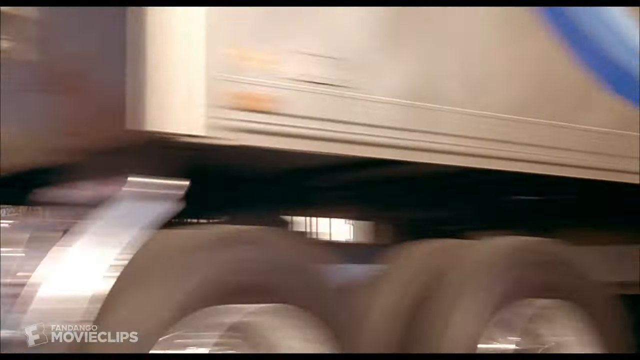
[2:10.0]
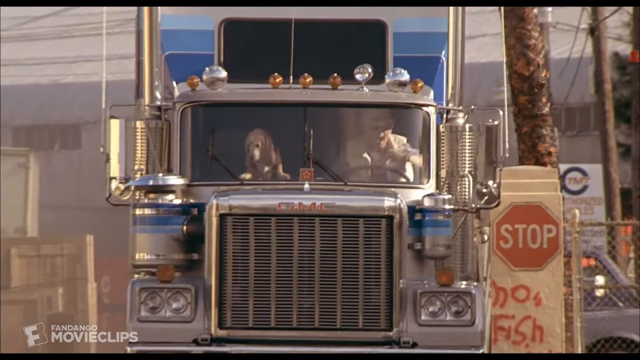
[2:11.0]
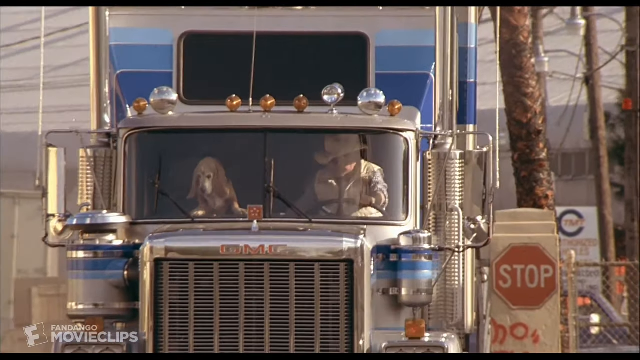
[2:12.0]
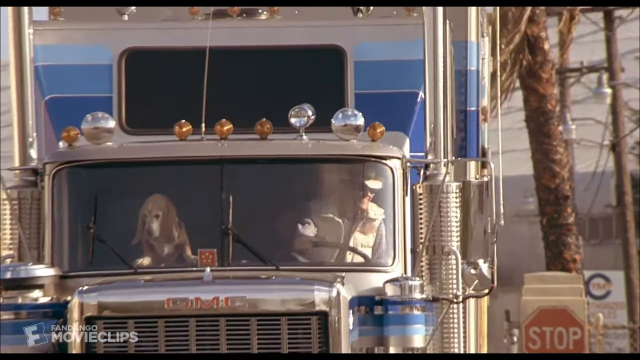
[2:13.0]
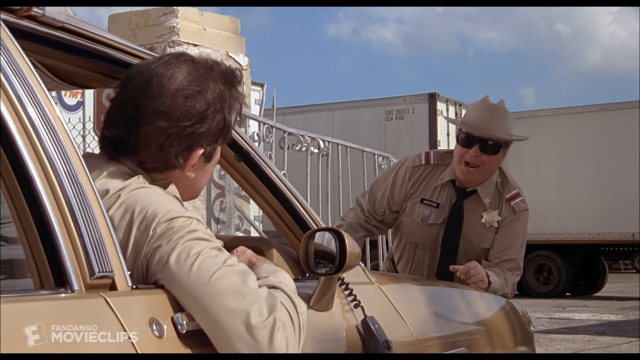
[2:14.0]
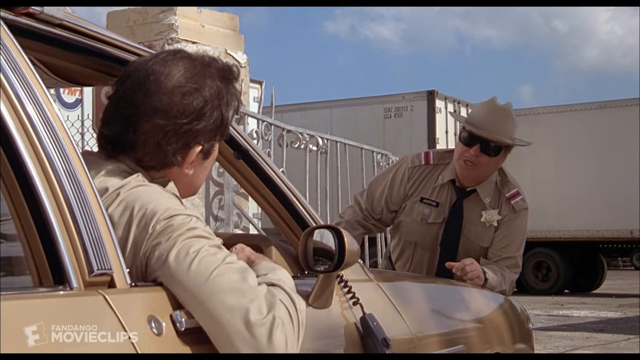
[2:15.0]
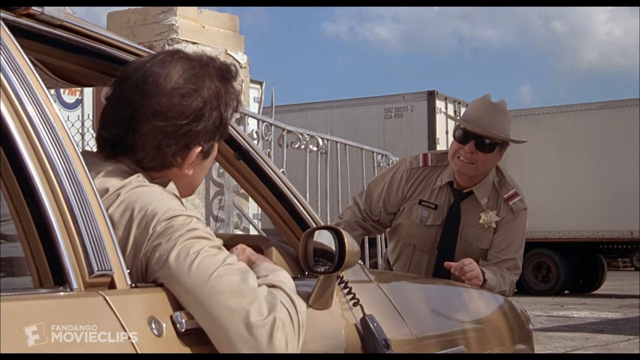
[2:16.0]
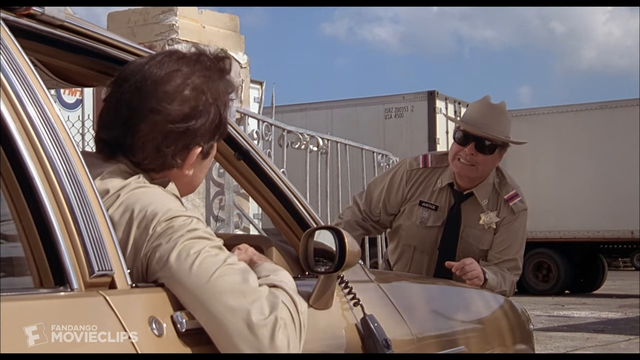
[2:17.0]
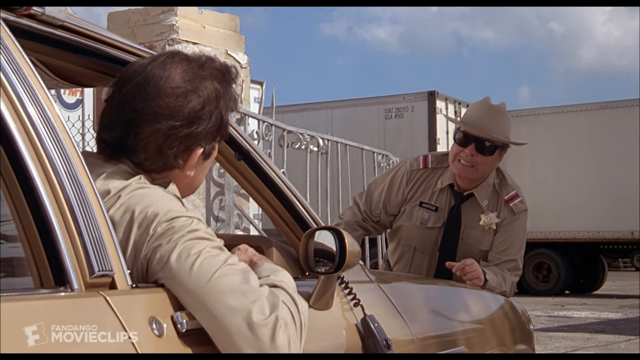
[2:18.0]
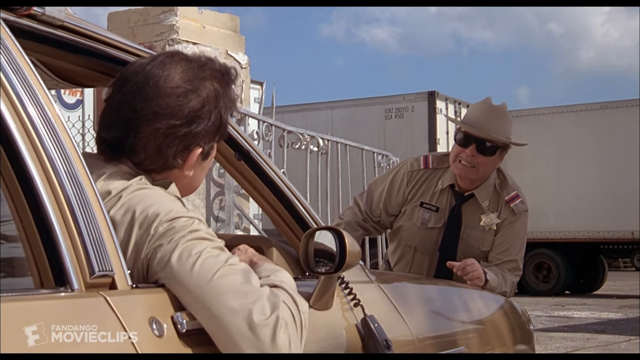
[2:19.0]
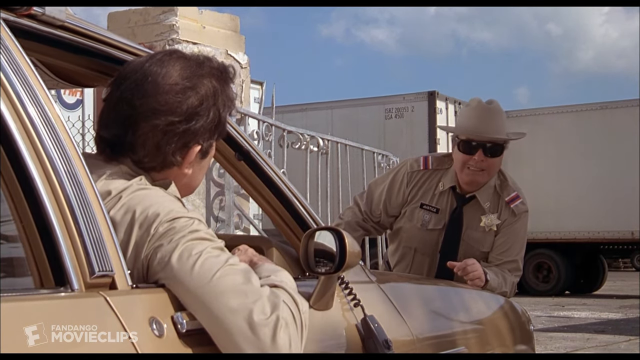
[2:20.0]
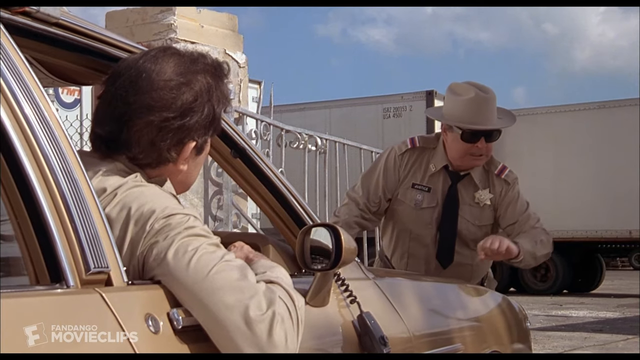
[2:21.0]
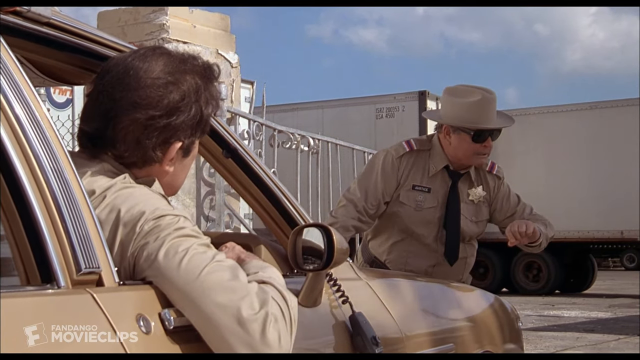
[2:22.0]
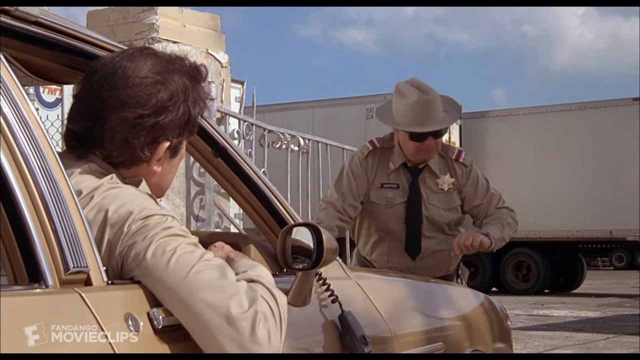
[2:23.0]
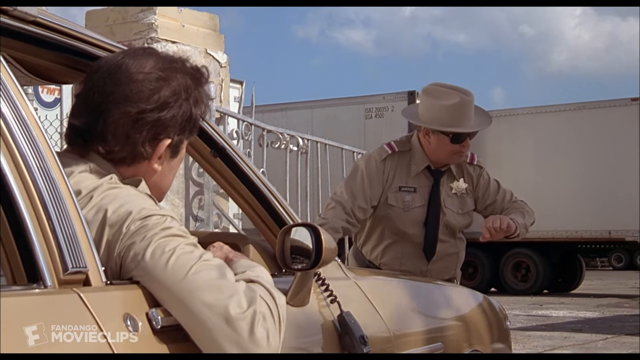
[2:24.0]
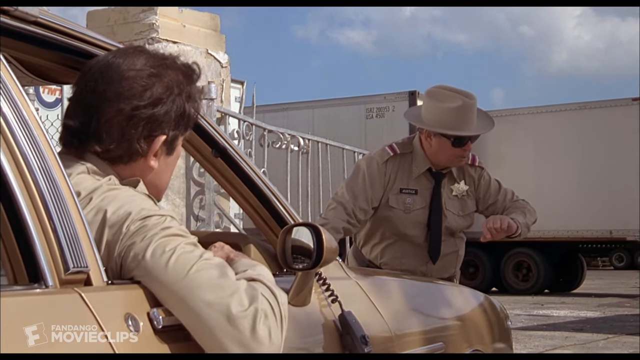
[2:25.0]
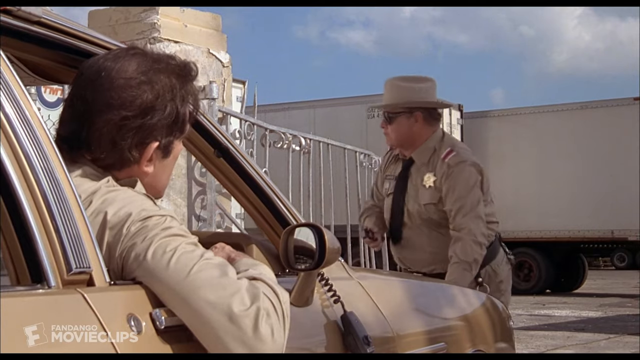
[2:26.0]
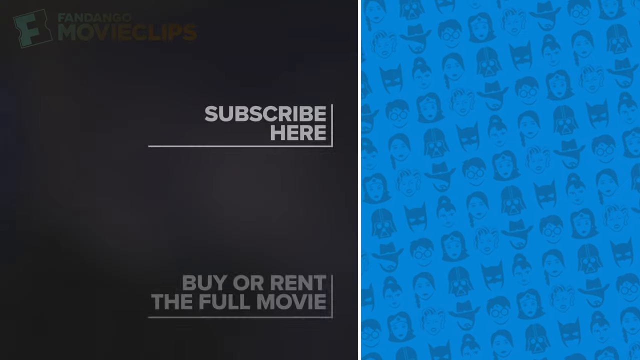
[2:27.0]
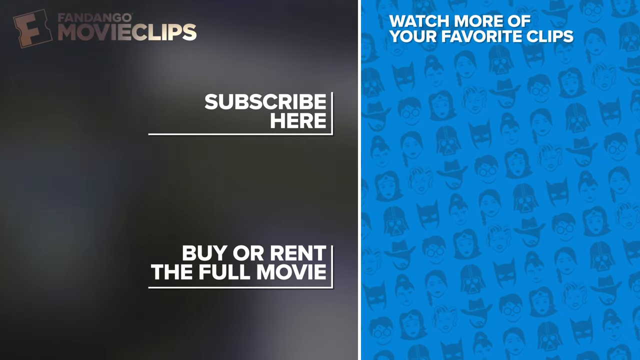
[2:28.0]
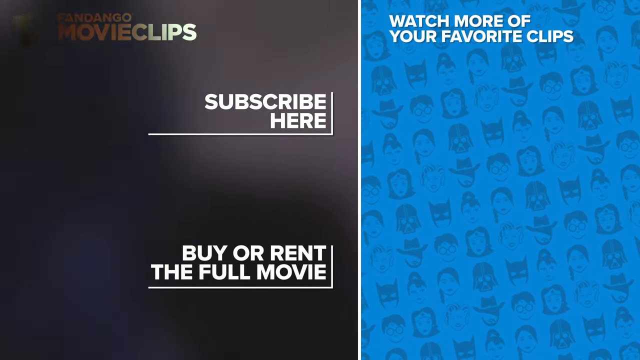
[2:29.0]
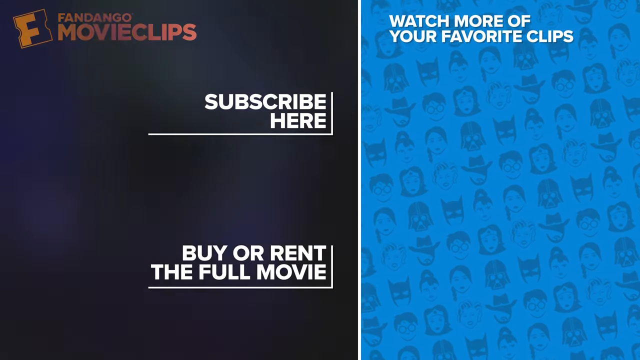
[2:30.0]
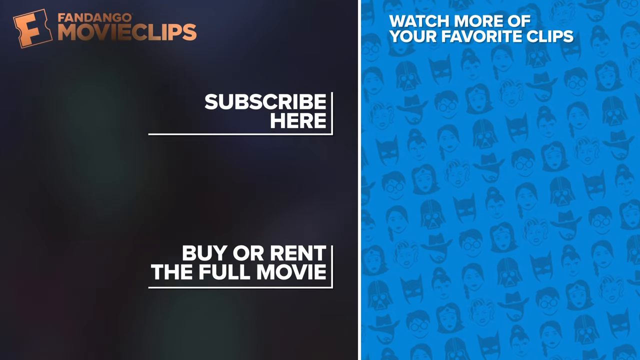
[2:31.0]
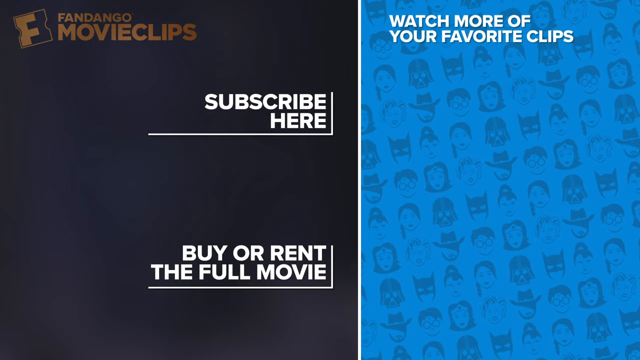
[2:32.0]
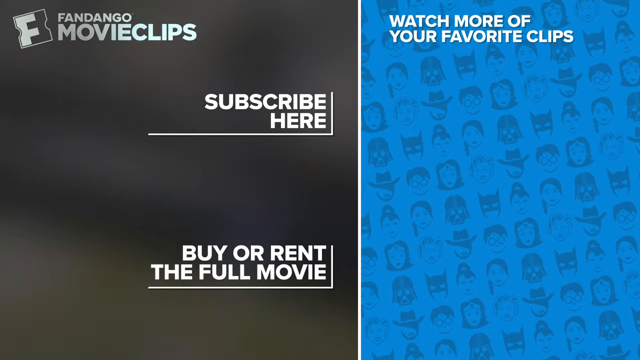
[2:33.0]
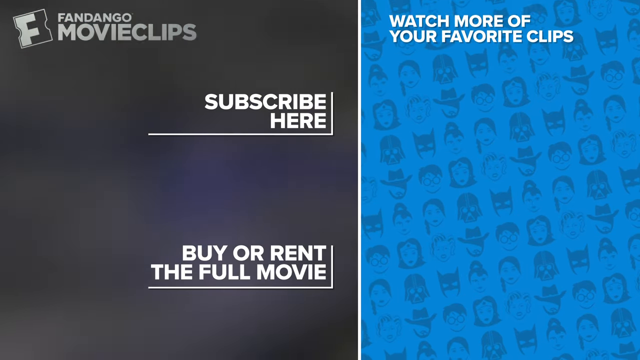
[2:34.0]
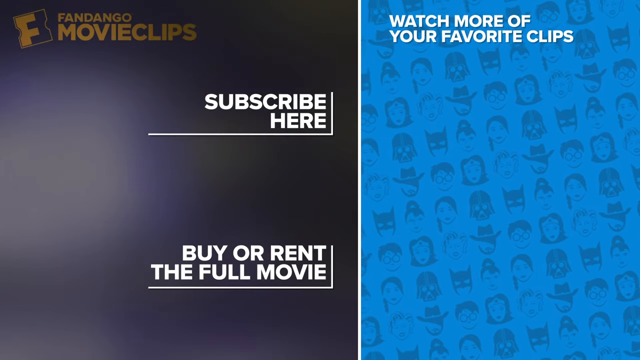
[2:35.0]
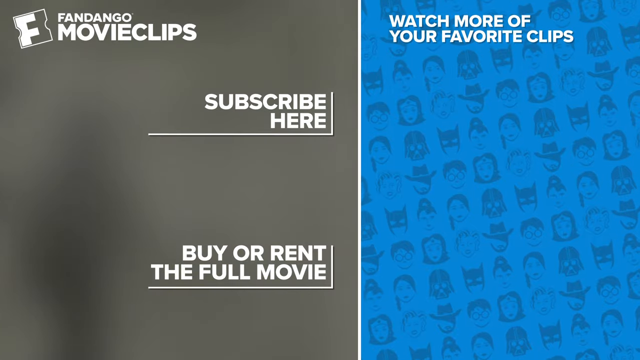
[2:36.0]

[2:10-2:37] The man starts celebrating inside the truck, looking very happy. The policeman inside the police car still has not gotten out, and the fat, angry policeman who was outside looks at a clock. The scene ends and an ad for the Fandango Movie Clips website appears, with text inviting viewers to subscribe to watch more favorite clips and a link to buy or rent their favorite movie.